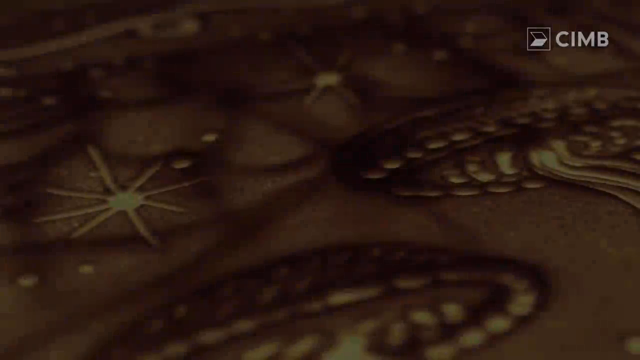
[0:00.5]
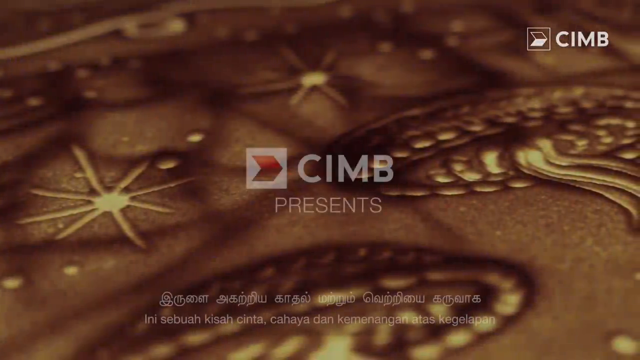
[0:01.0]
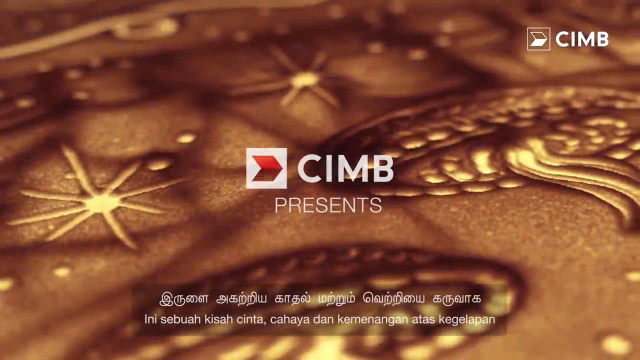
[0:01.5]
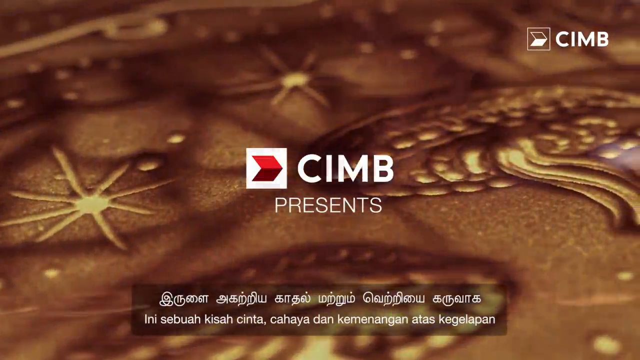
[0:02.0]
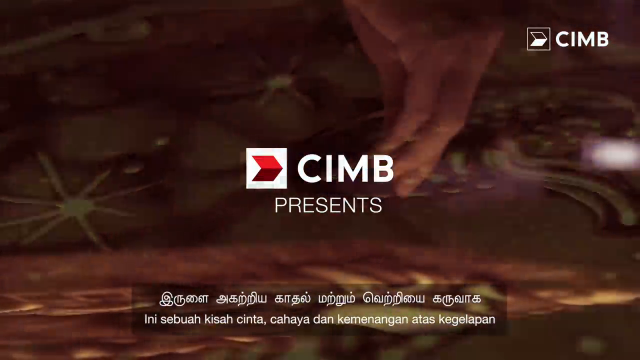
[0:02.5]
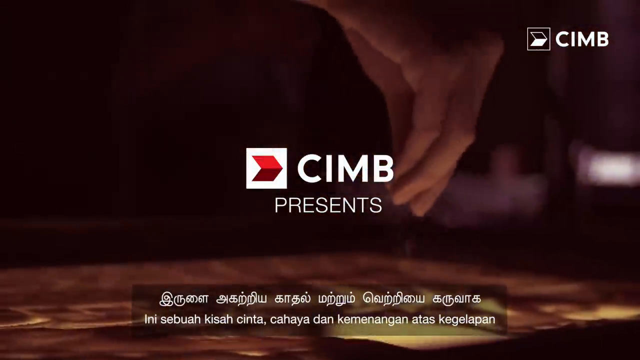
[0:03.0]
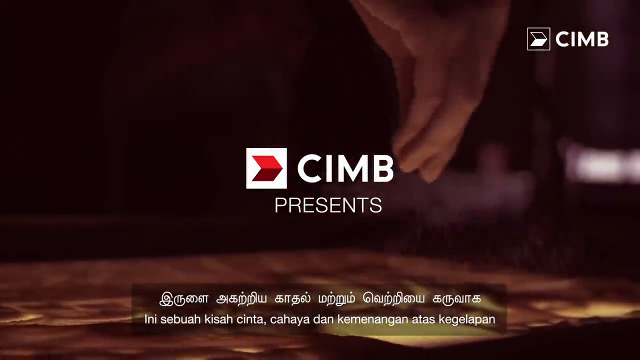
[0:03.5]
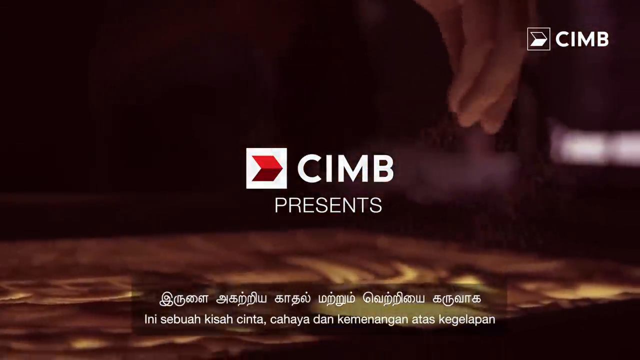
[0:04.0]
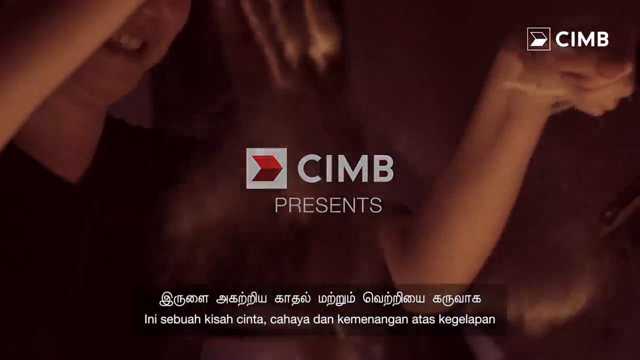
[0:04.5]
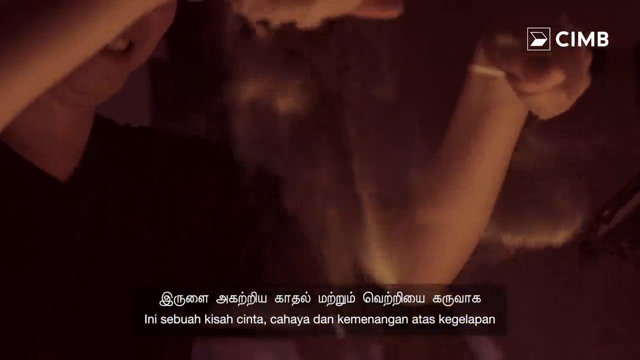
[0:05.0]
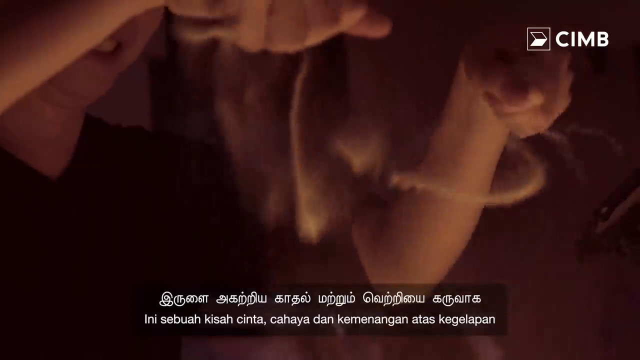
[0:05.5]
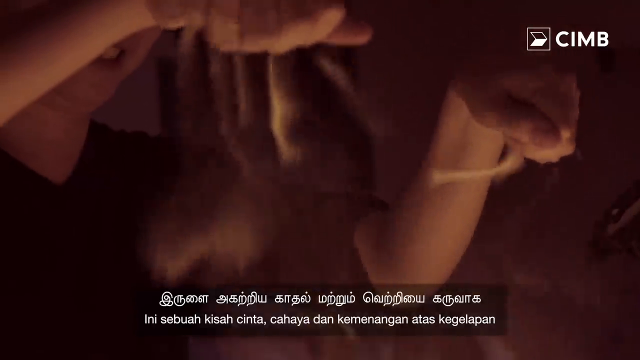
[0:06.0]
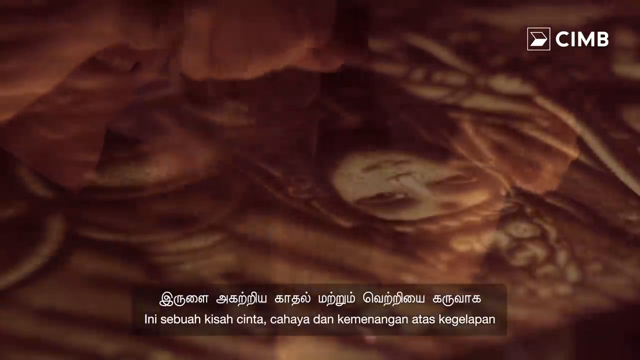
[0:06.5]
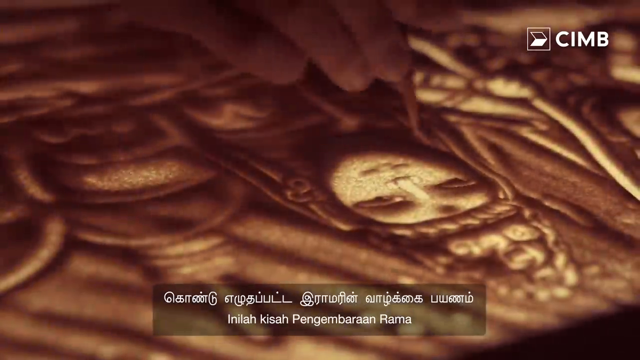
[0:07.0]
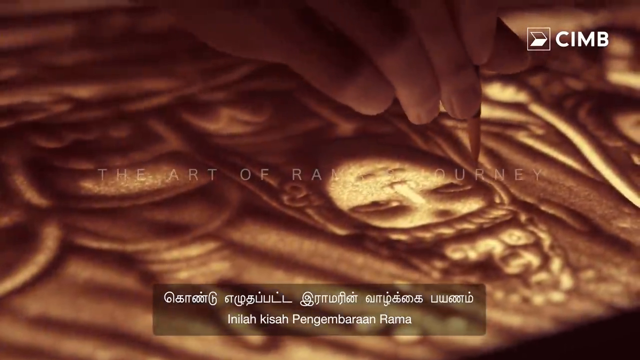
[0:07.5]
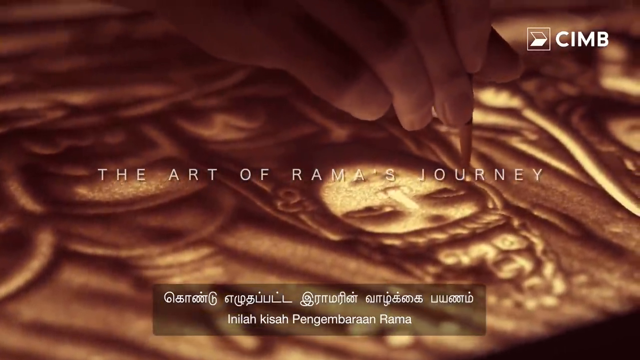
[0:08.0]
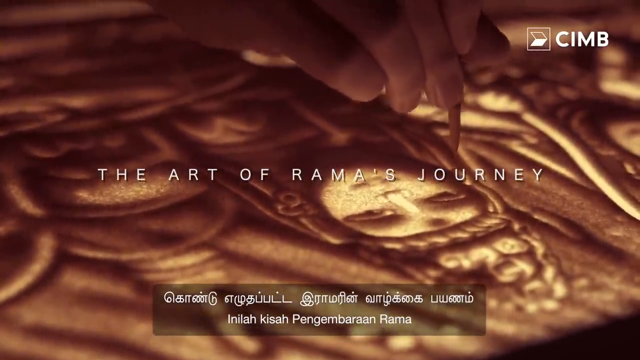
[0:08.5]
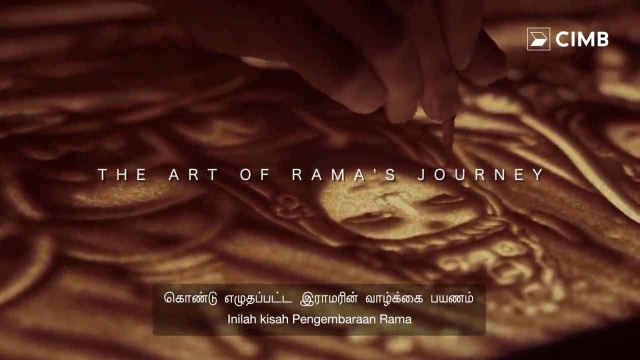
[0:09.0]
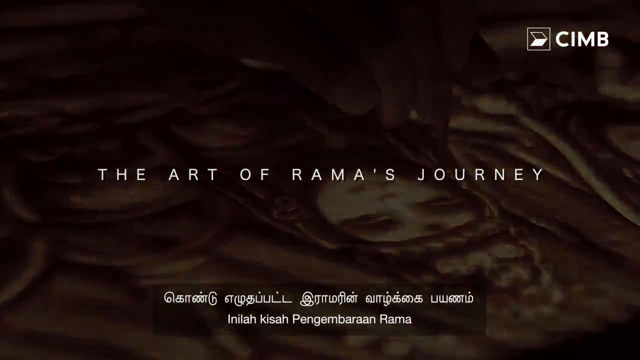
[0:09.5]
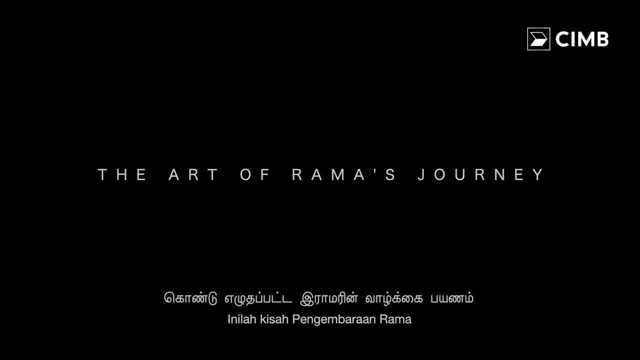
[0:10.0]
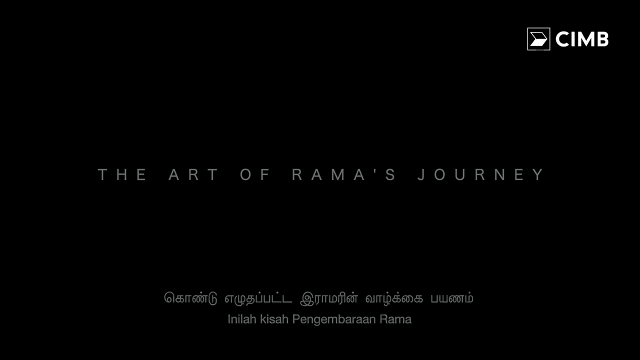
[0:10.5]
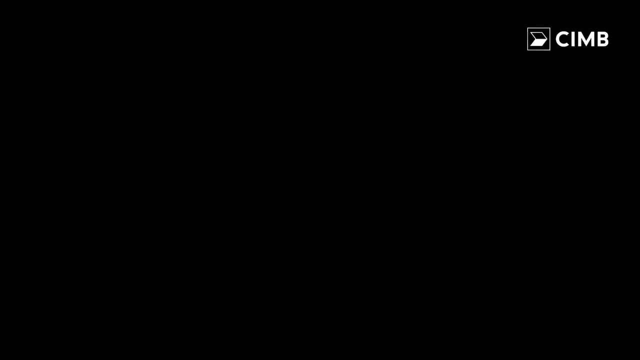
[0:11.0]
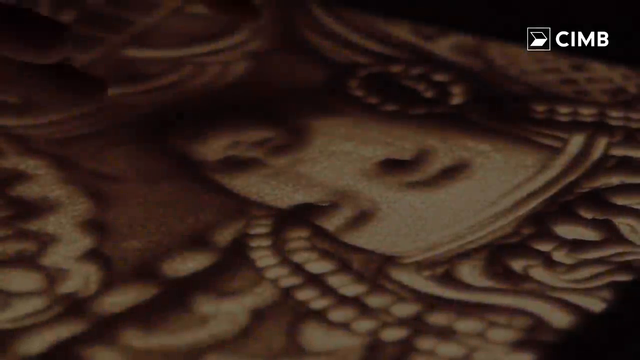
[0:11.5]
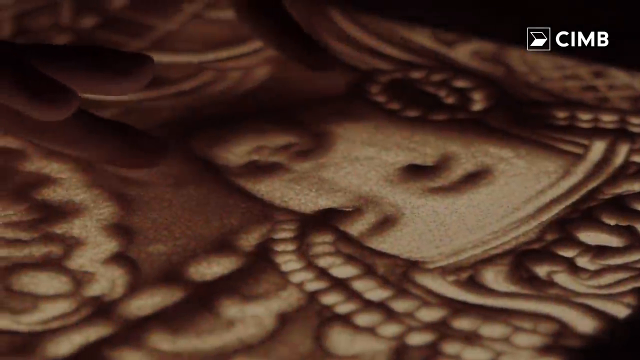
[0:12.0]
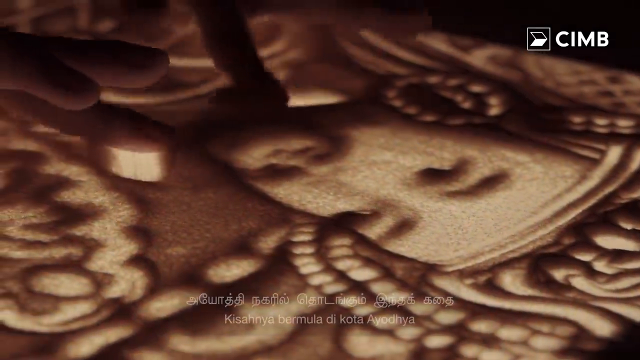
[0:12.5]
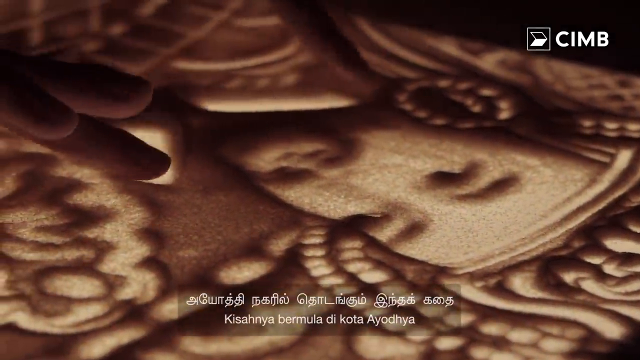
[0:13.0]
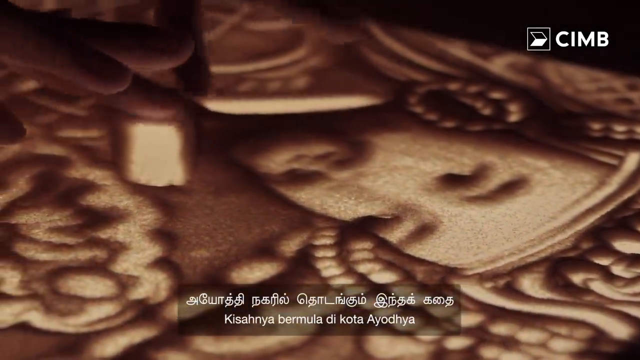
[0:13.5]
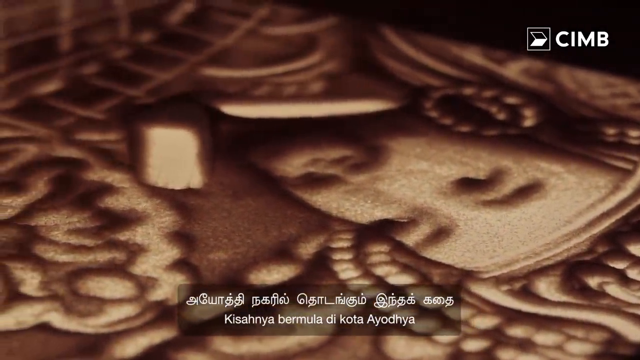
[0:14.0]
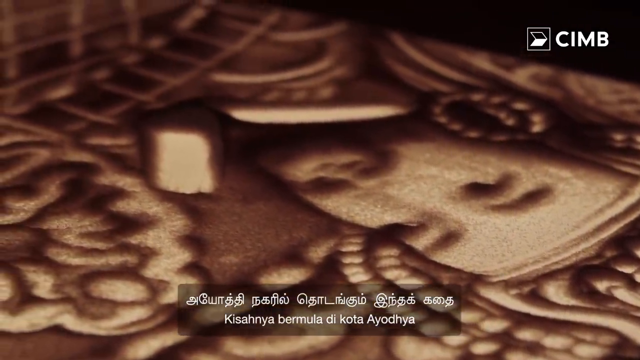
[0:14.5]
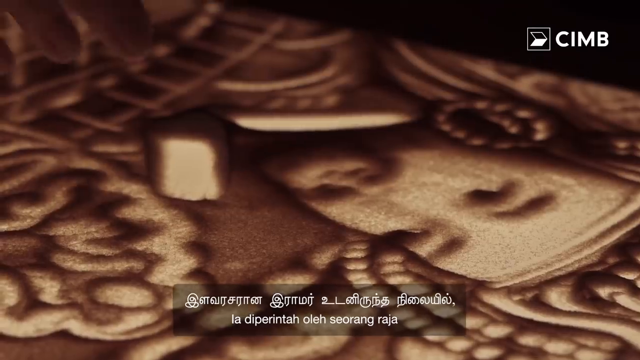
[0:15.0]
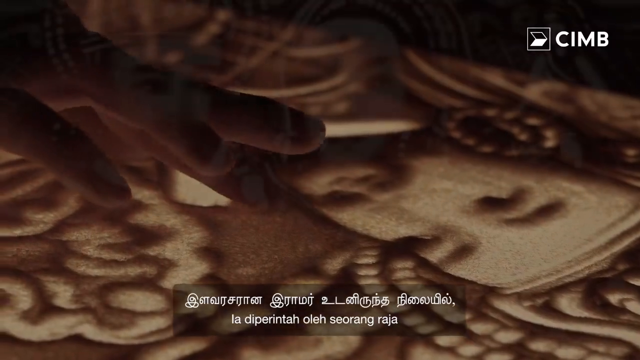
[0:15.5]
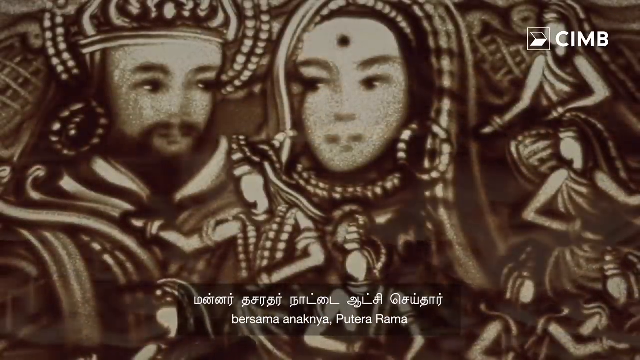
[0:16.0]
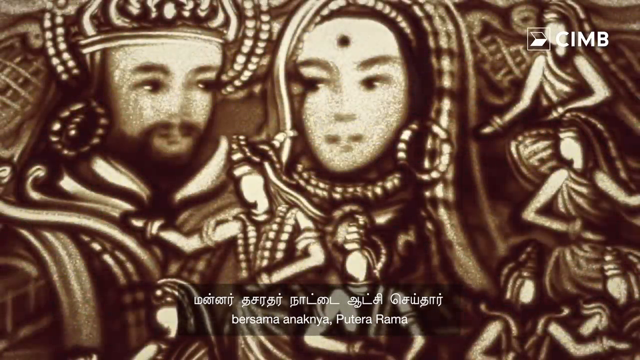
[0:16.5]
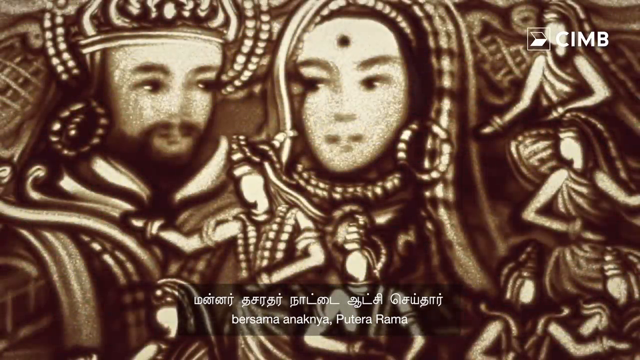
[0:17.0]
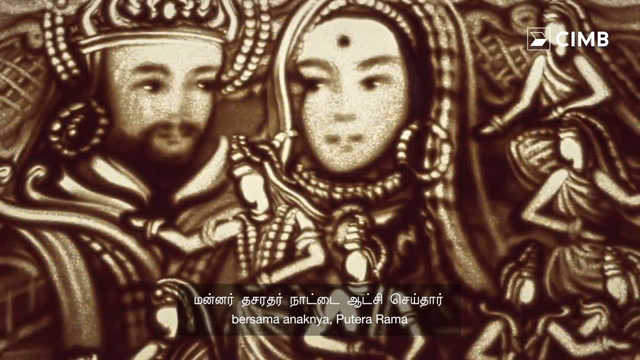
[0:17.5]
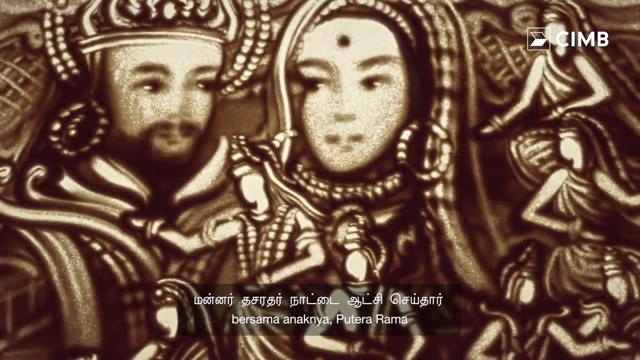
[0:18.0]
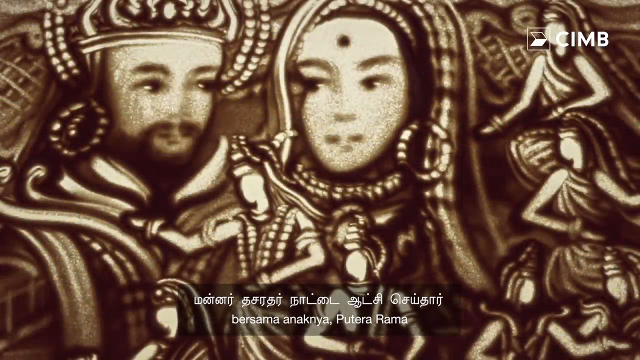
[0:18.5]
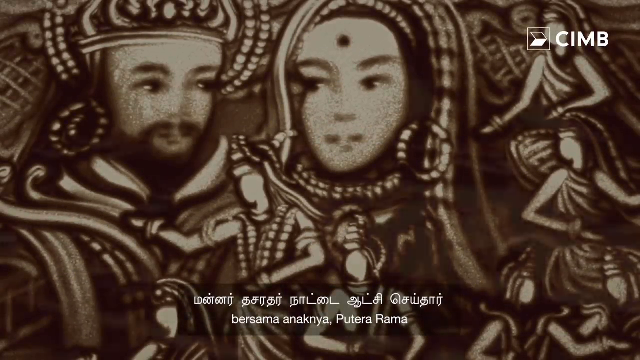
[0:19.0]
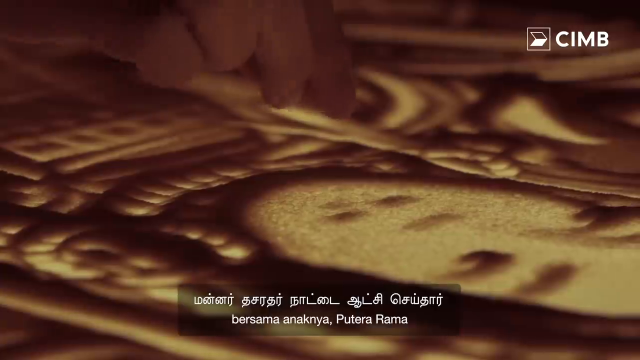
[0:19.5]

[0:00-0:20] The video opens with the words "CIMB presents", and a person's hand sprinkles some type of fine sand on a tabletop. A person then sprinkles the sand with both hands, a giant grin on their face. Next, someone draws a figure of a woman, with the words "the art of Rama's journey" across the center of the screen. A person's fingers continue creating art on the tabletop, apparently using the sand to make the artwork, and a finished image of what looks like a queen and a king appears. A short shot of the artwork follows. Only a person's hand and sand being poured onto a table are visible, and then a pencil as well as fingers are used to move the sand and create the artwork.